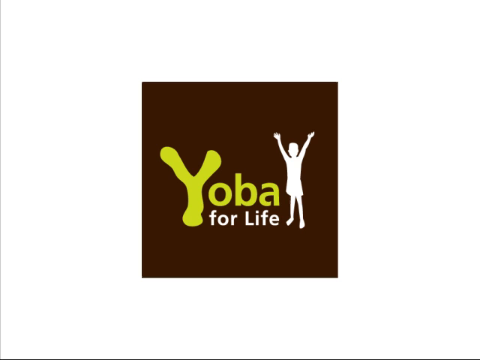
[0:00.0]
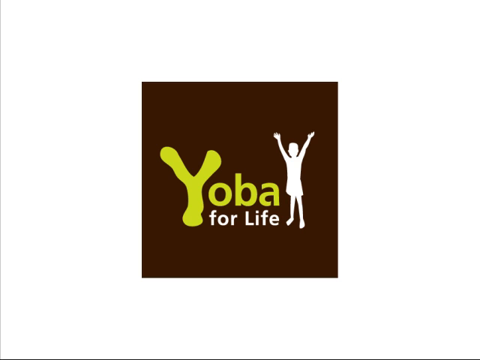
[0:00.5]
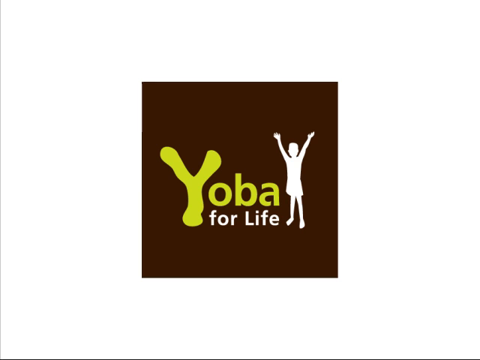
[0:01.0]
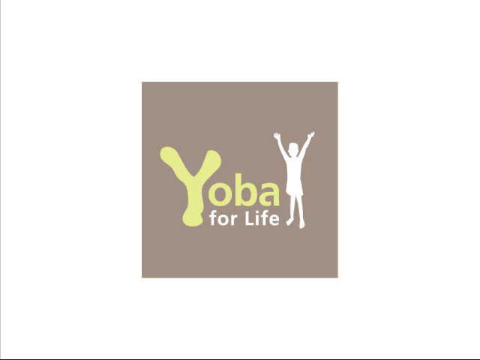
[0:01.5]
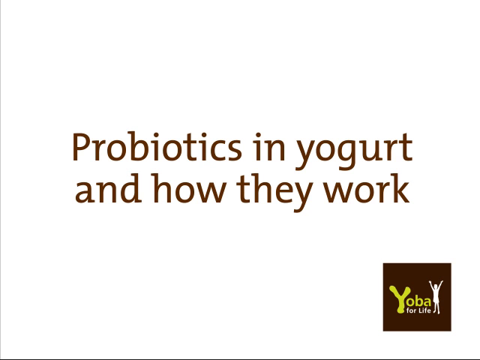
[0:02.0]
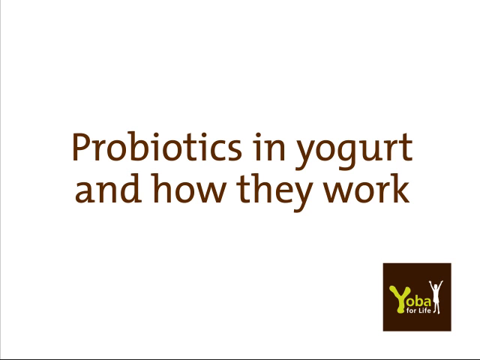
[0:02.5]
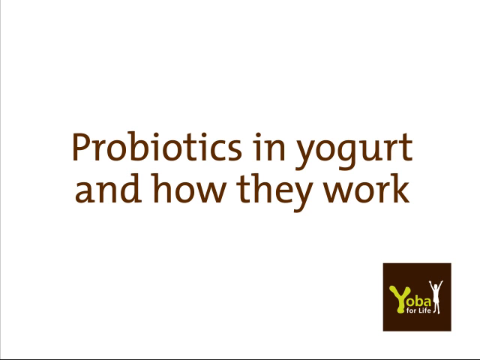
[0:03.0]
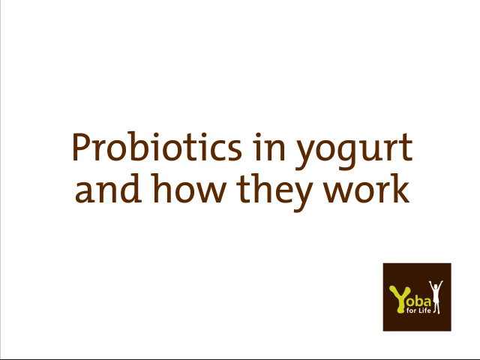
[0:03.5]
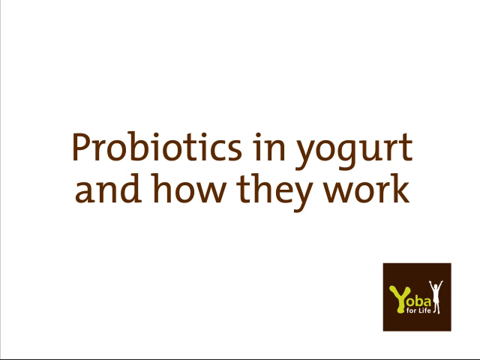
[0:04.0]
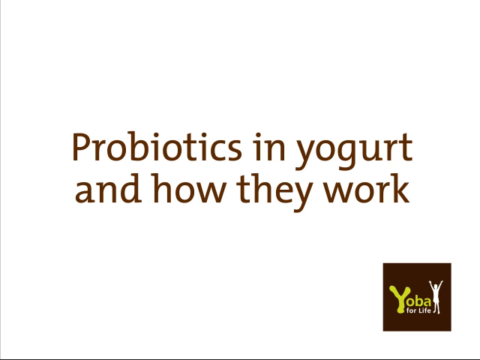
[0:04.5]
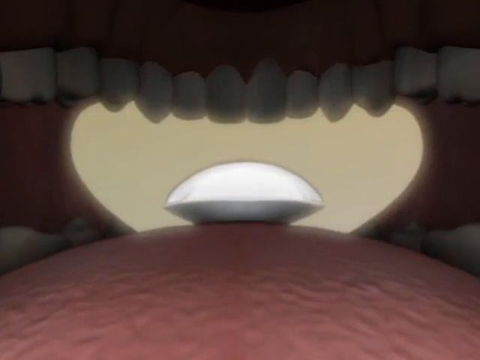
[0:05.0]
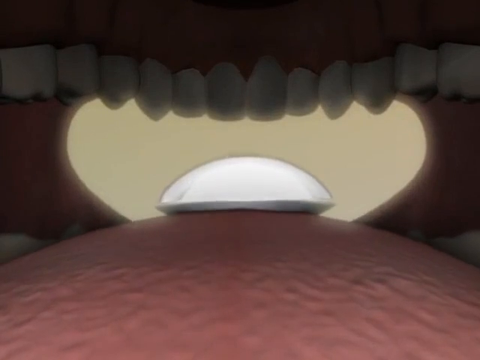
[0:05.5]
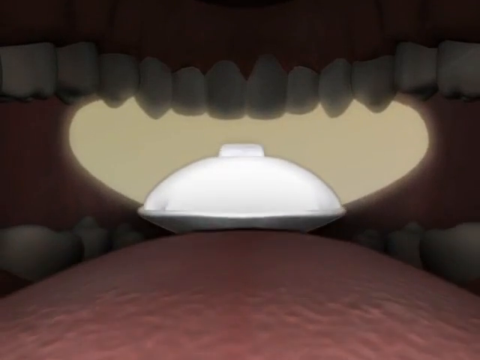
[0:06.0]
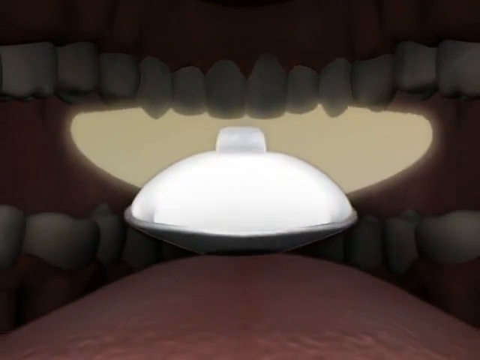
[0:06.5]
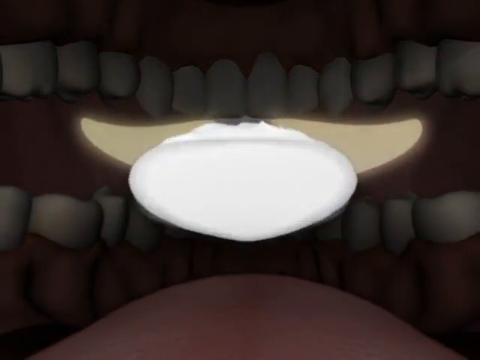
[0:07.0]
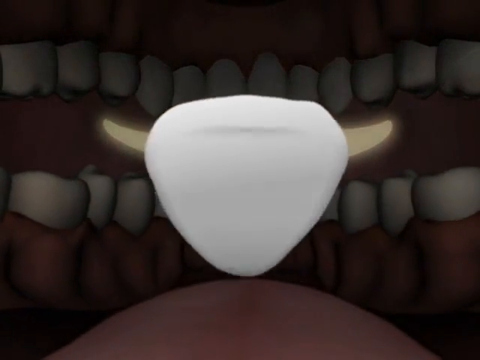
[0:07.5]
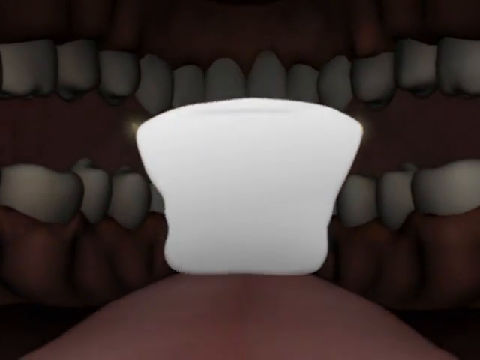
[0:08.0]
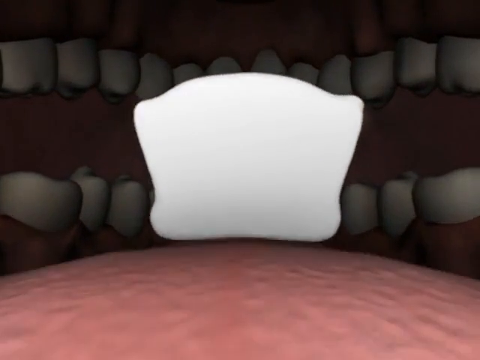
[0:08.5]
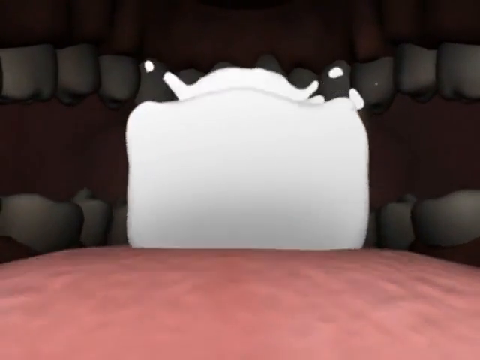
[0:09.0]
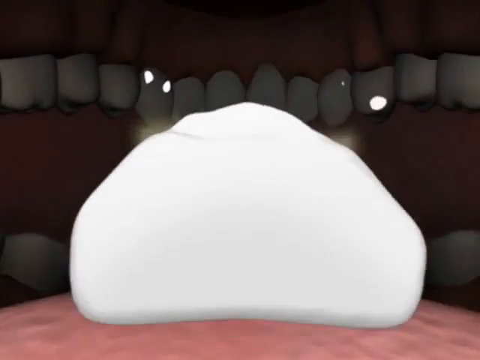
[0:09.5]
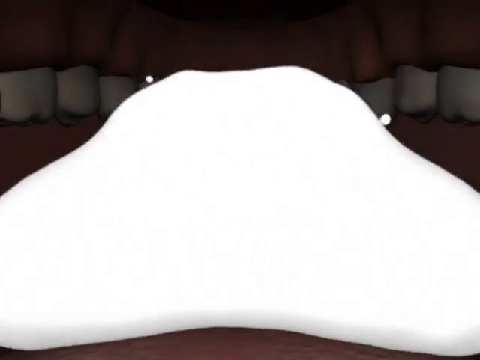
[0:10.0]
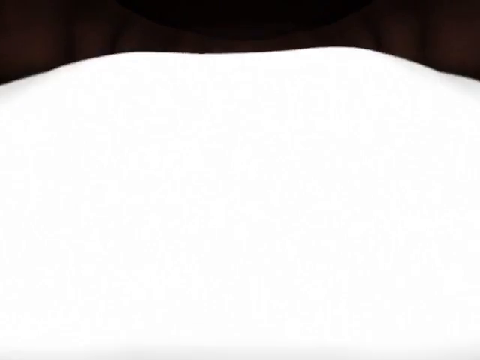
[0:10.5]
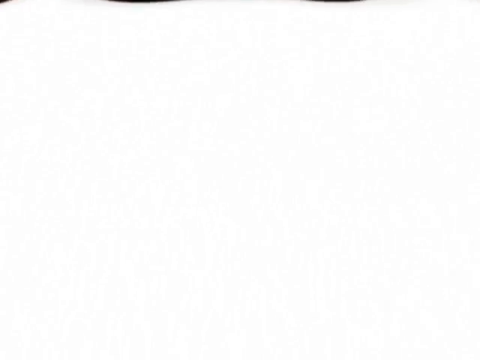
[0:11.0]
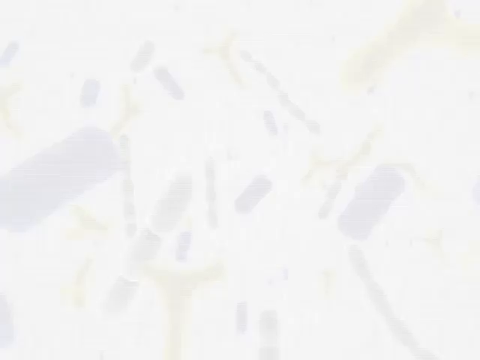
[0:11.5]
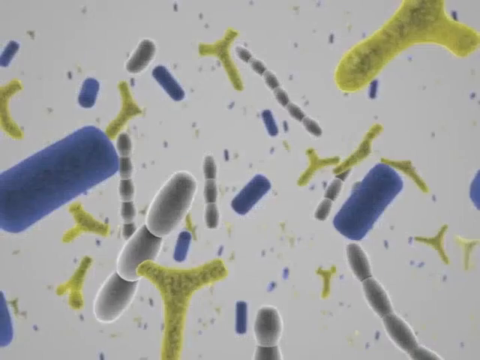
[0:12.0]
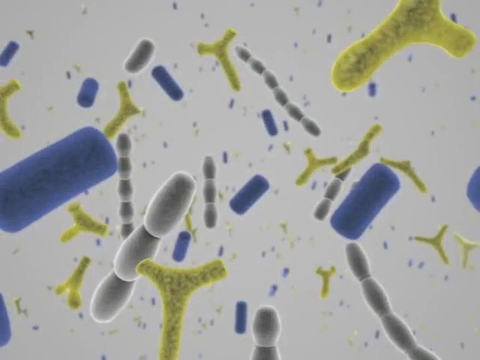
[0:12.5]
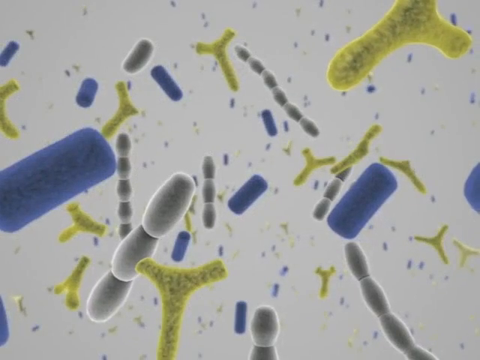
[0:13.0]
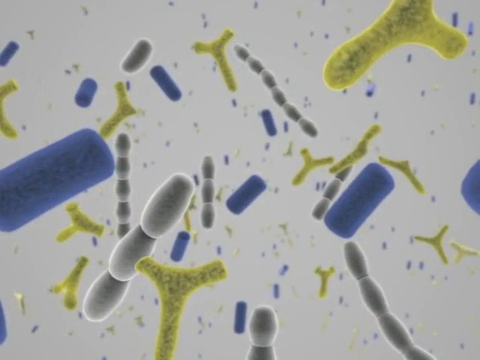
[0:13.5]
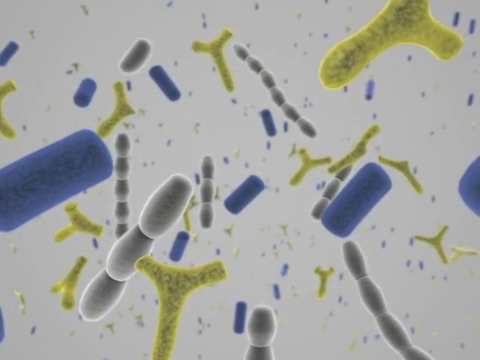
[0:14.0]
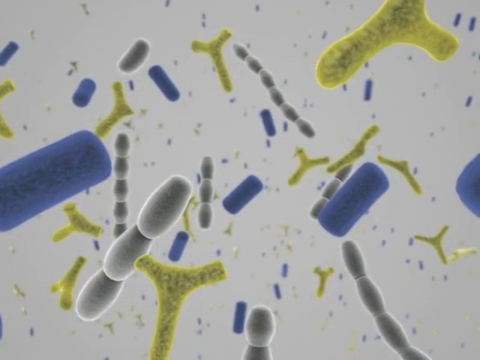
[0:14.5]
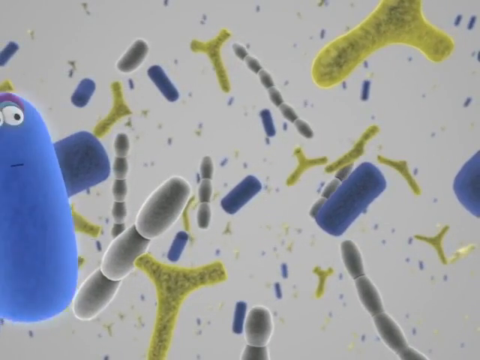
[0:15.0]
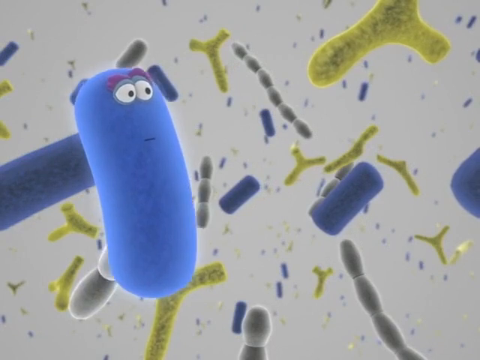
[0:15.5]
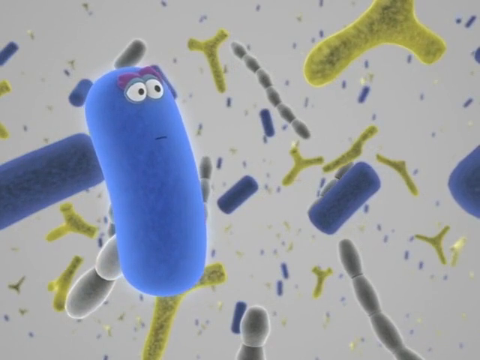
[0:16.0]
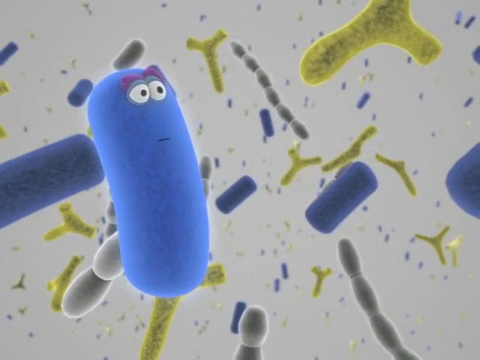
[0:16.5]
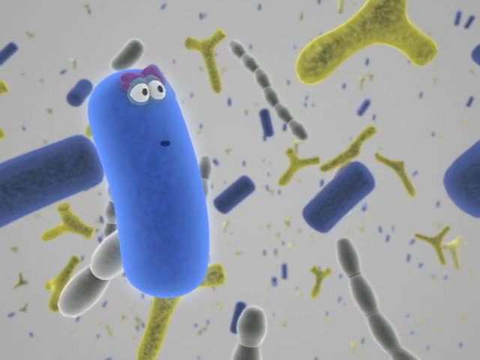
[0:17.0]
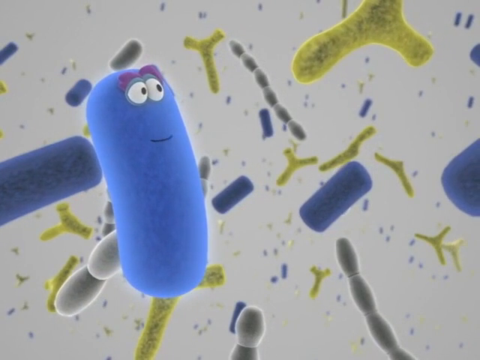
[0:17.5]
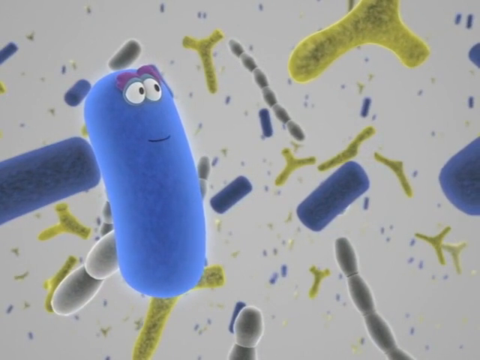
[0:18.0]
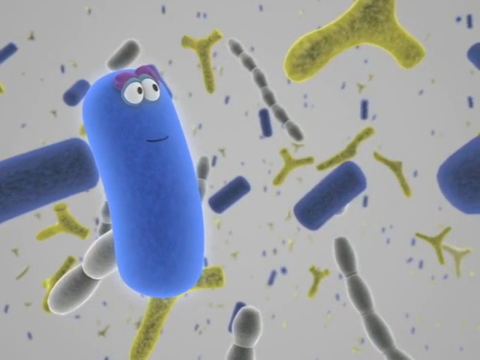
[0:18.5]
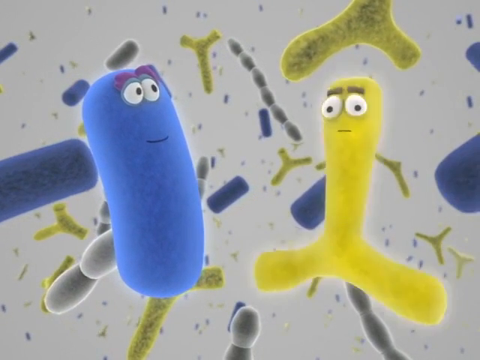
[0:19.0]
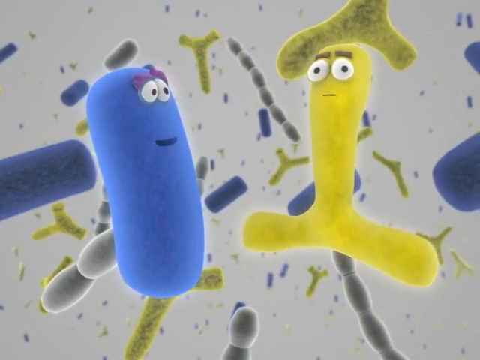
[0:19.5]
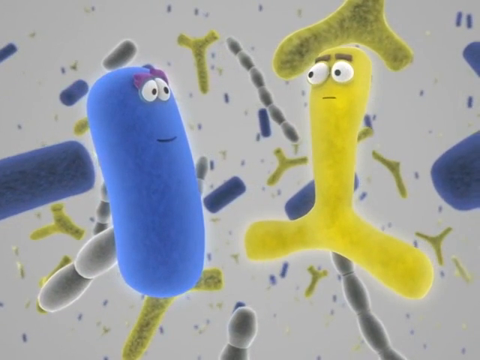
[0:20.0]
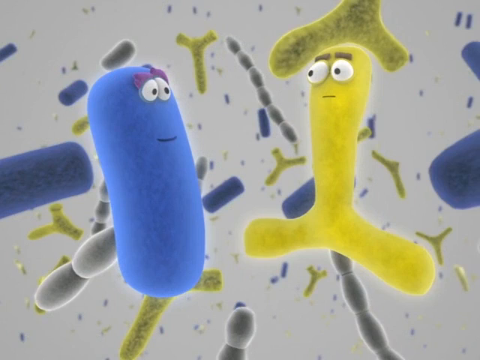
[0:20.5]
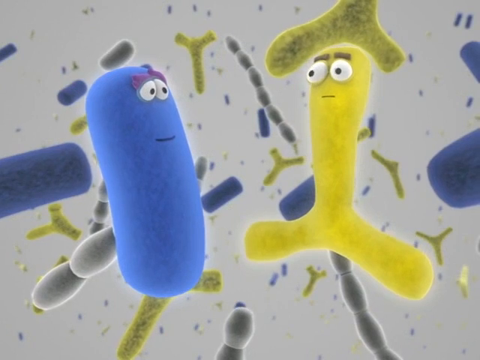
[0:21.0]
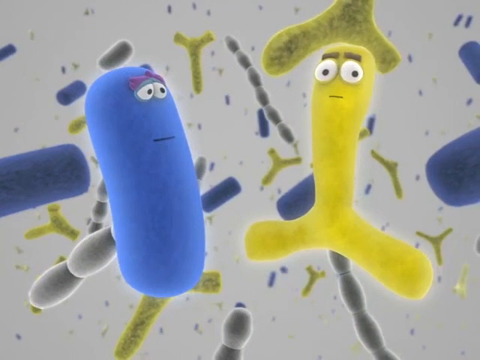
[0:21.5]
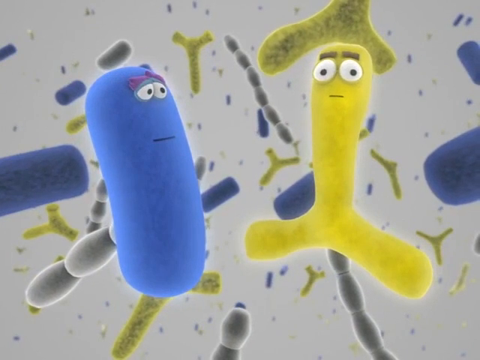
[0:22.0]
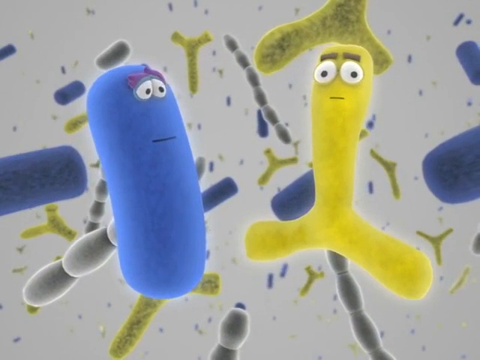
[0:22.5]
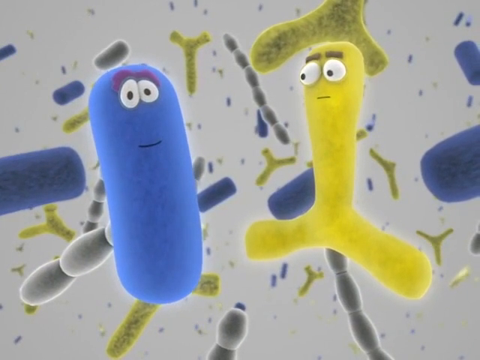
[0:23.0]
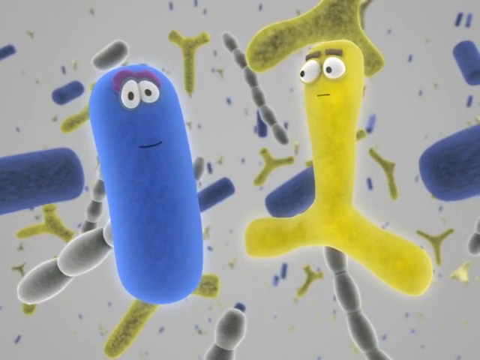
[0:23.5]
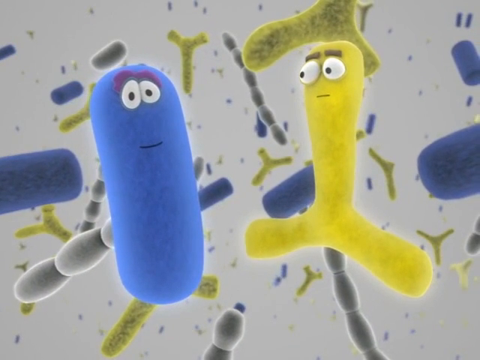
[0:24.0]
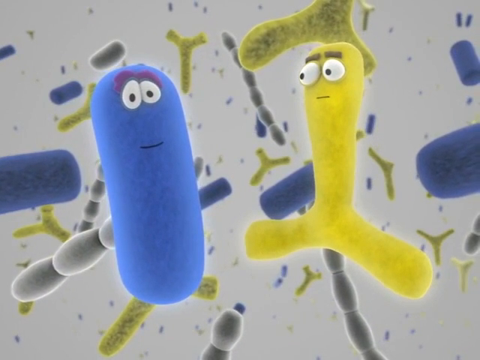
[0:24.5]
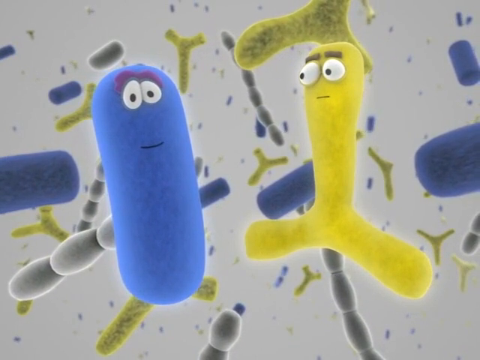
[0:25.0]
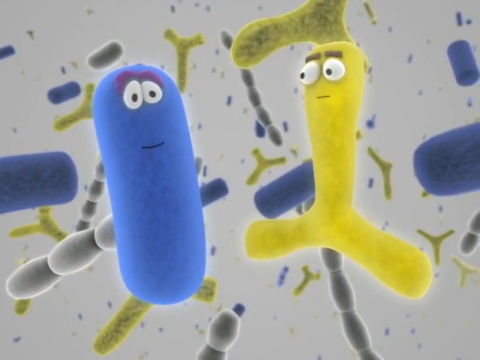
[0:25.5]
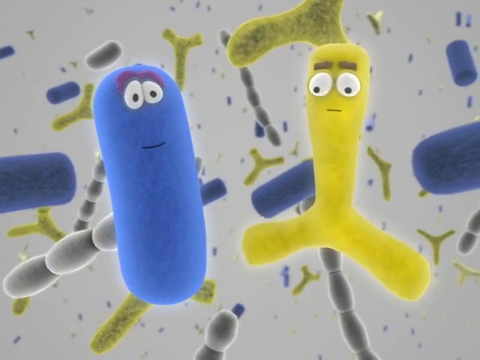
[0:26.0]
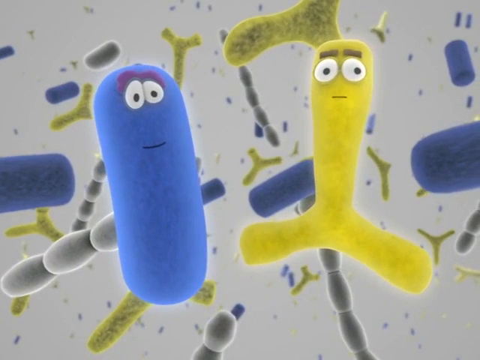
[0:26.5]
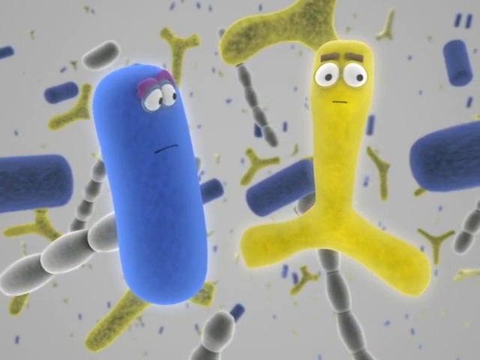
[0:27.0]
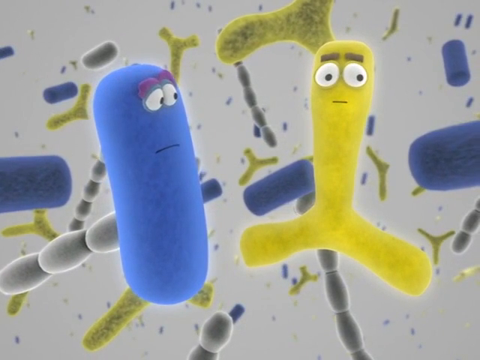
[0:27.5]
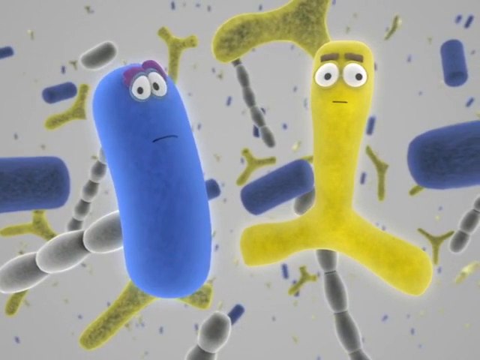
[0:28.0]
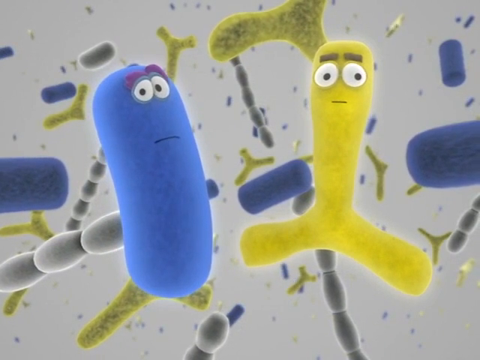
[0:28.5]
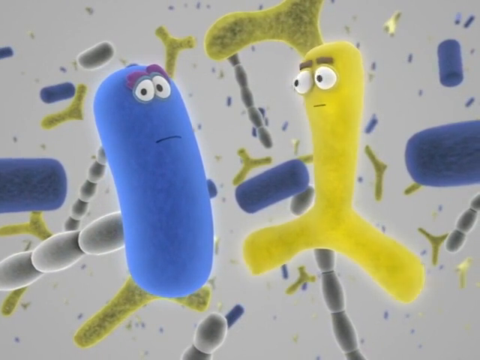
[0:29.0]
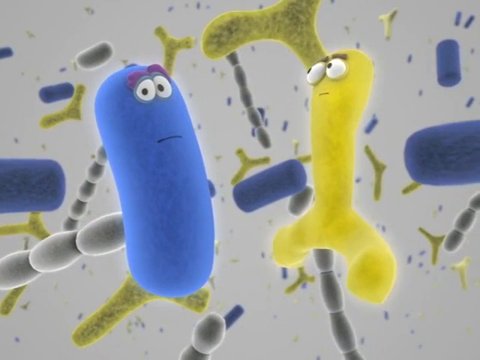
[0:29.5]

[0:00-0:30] A logo for Yoba for life appears, showing a person standing with their hands up in the air. Captions in the middle read "probiotics in yogurt and how they work," and the Yoba logo appears again in the bottom right corner. Next, someone's open mouth is shown, with the upper and lower teeth visible. In the middle, a spoon is inserted into the mouth, with the spoon coming toward the viewer, and the tongue is visible at the bottom. White yogurt goes into the mouth and the person swallows it. Then what looks like a blue probiotic appears on the left and a yellow probiotic on the right. They look at each other; the yellow one looks at the viewer, then back at the blue one to its left. The blue probiotic looks at the viewer, then over at the yellow one on the right, while the yellow one looks toward the viewer, and finally both look at the viewer. In the background, a whole bunch of other colorful probiotics swim against an all-white background.